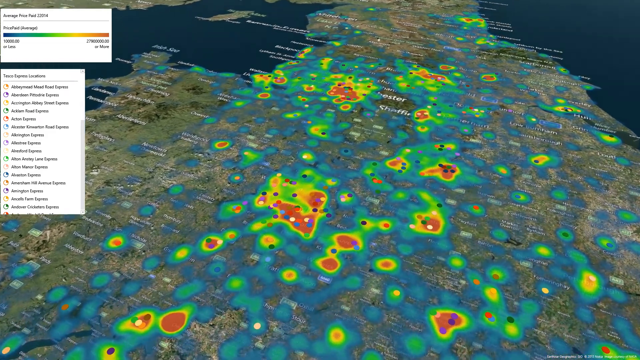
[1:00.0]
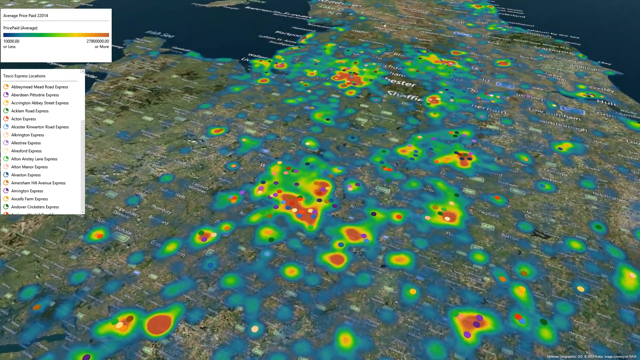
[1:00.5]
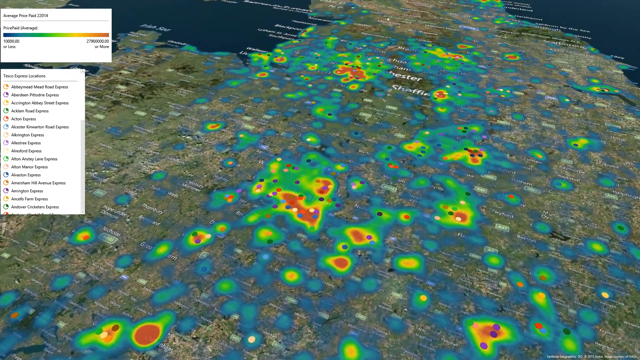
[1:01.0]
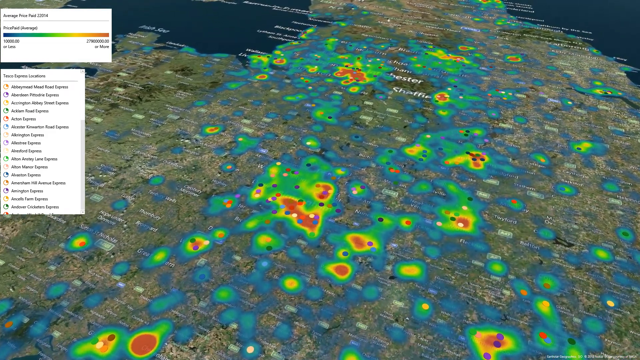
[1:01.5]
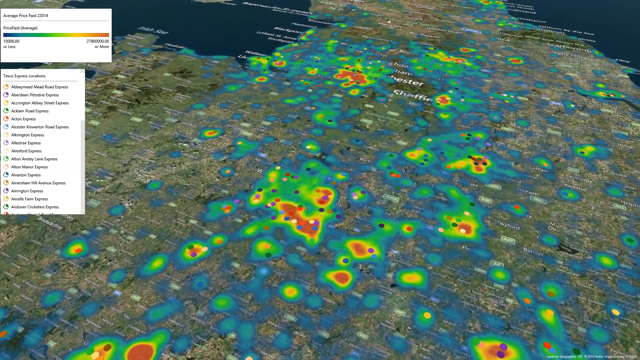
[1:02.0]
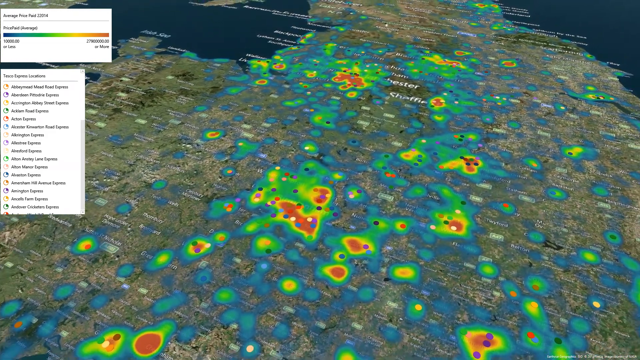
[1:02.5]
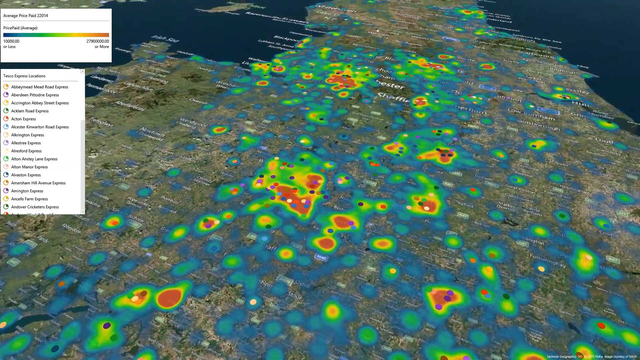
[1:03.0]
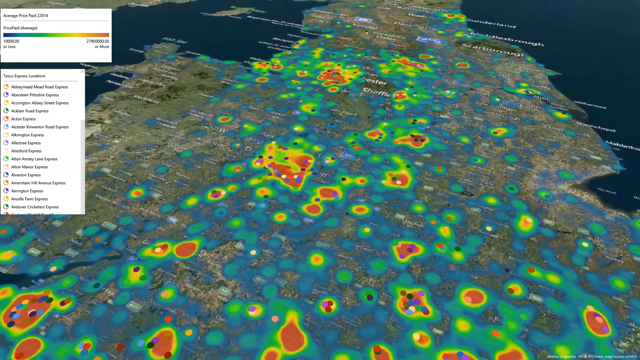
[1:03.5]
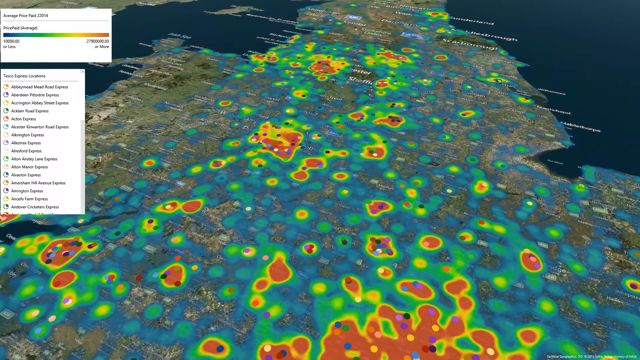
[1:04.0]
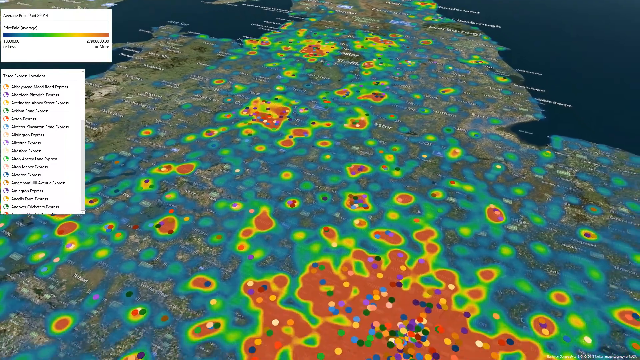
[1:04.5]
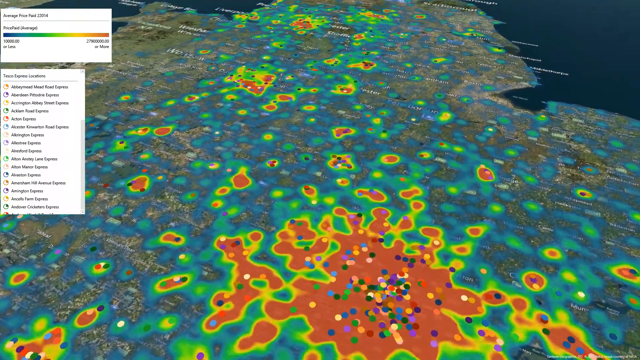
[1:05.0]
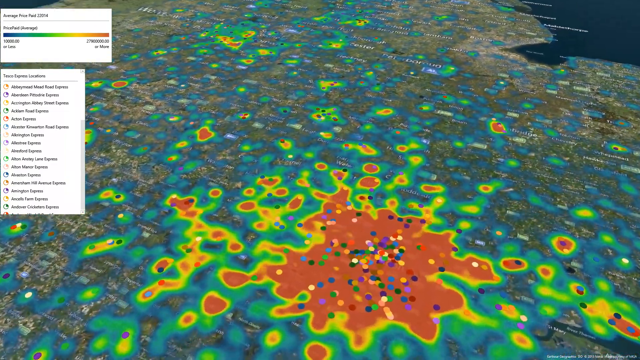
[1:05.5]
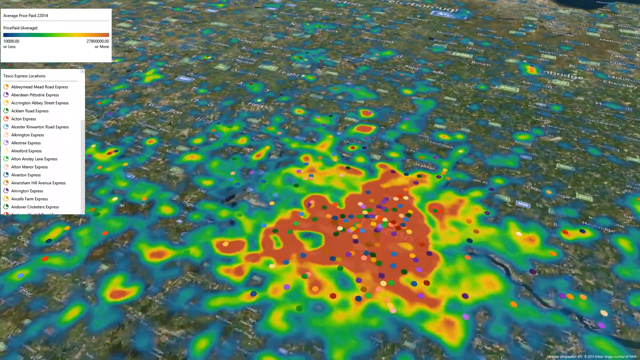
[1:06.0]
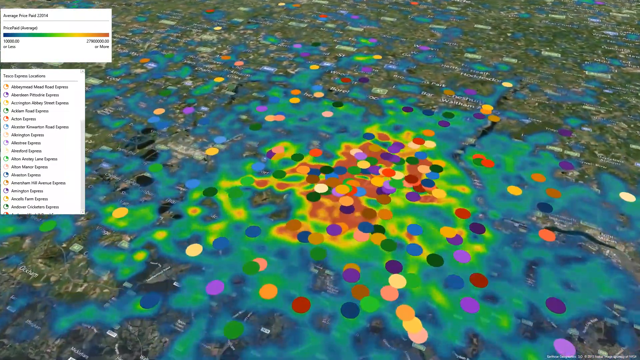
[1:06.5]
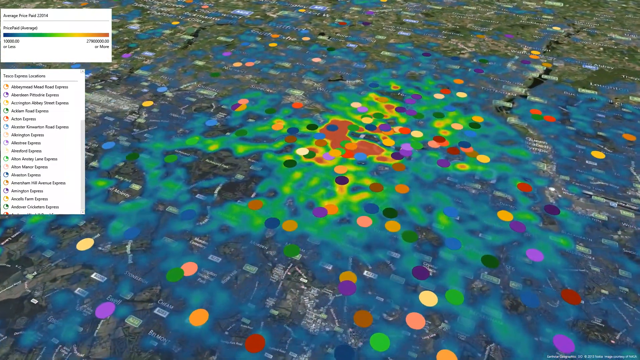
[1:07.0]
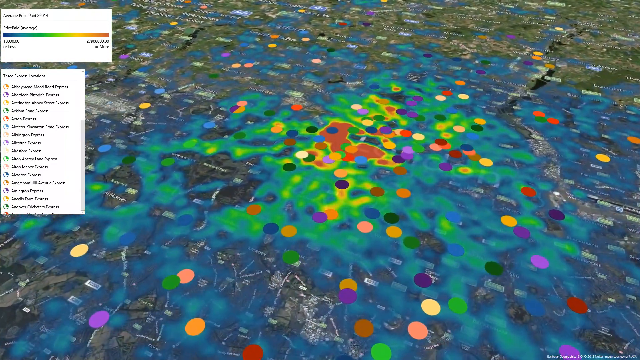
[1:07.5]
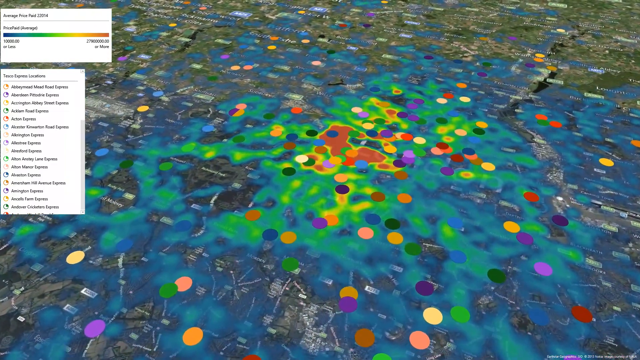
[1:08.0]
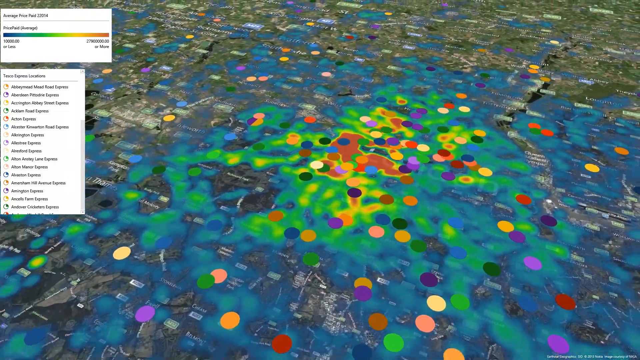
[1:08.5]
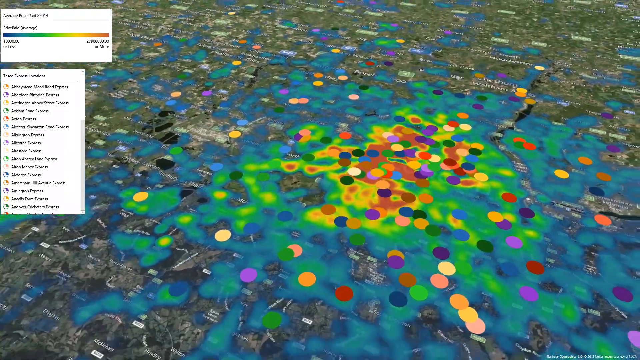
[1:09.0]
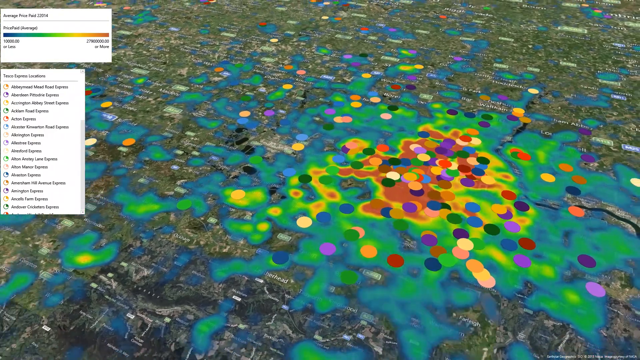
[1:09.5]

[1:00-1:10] The camera is zoomed back in, and most of the land is visible rather than colored red; the closer it gets, the more colors can be seen. Each of the alphabetical names listed on the second table has a colored dot, and those dots are now overlaid on the map, on top of the heat-signature-style coloring from the original bar, as the camera zooms all the way in. The dots land over individual neighborhoods. As the view zooms into street level, the first map almost goes away and the red is concentrated in a very small area, compared with the overhead view, where most of England appears to be red. When it zooms in, the dots also become larger, showing a mix of purples, reds, pinks, some beige, and different shades of yellow, along with some blue and green dots.